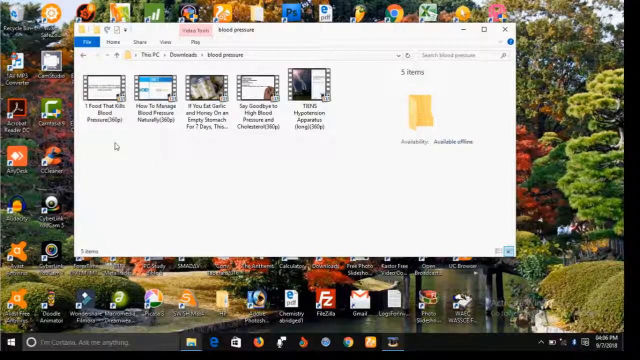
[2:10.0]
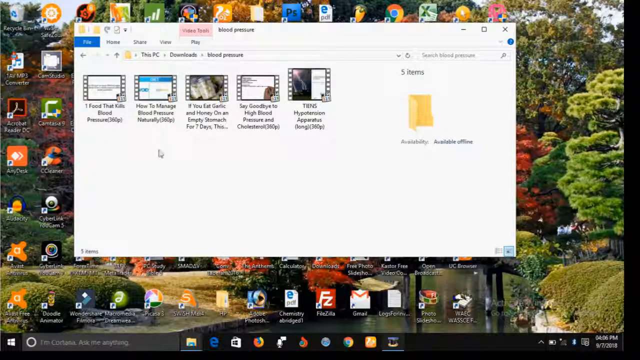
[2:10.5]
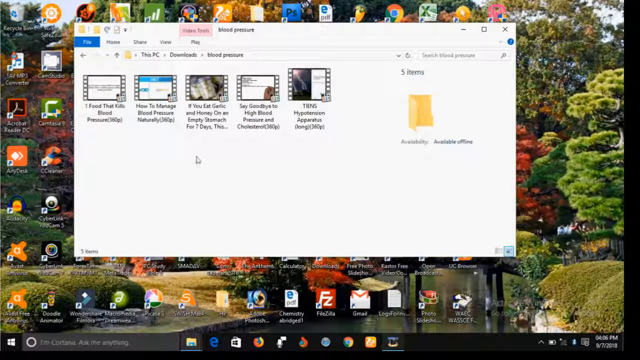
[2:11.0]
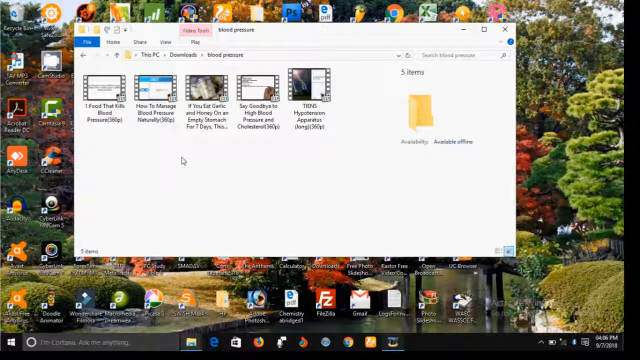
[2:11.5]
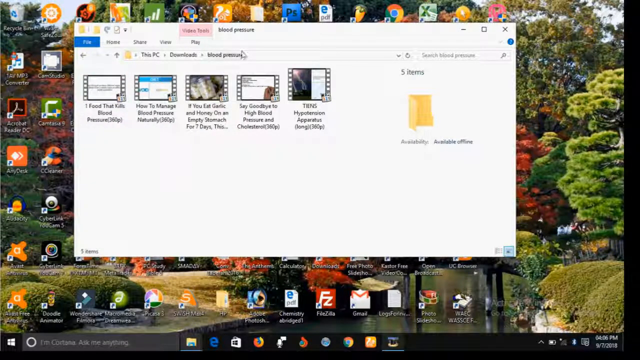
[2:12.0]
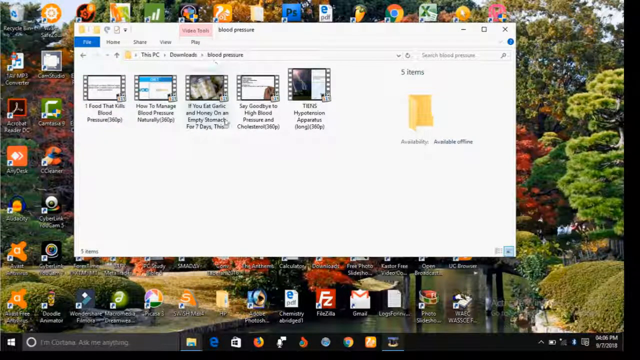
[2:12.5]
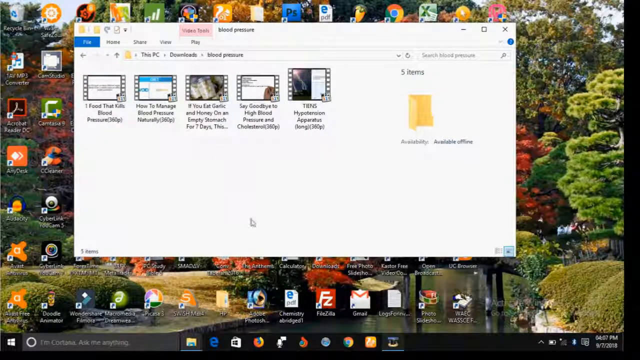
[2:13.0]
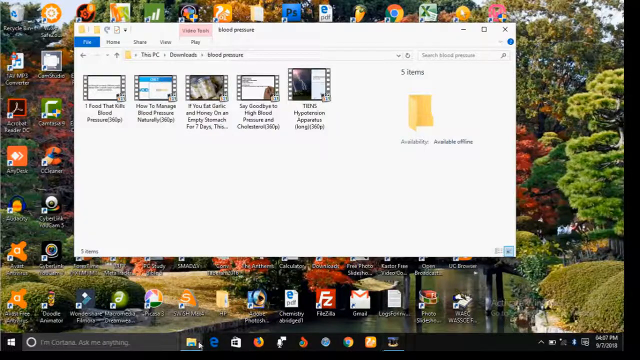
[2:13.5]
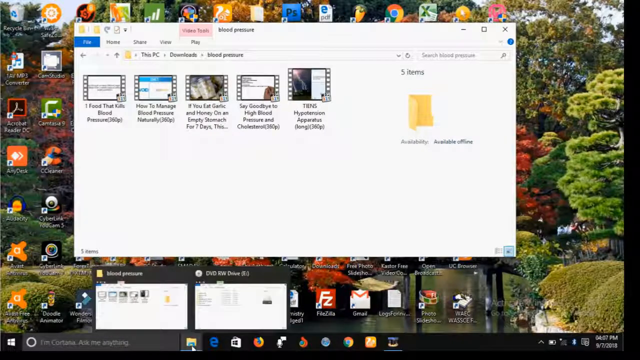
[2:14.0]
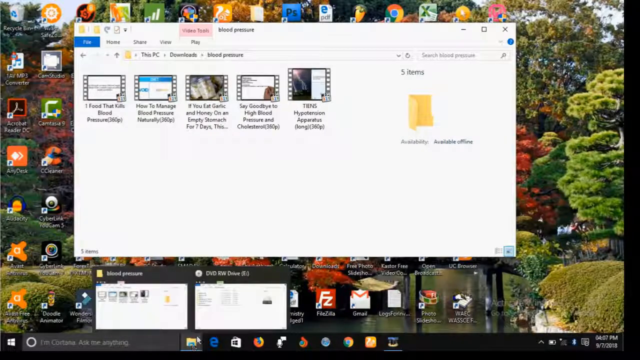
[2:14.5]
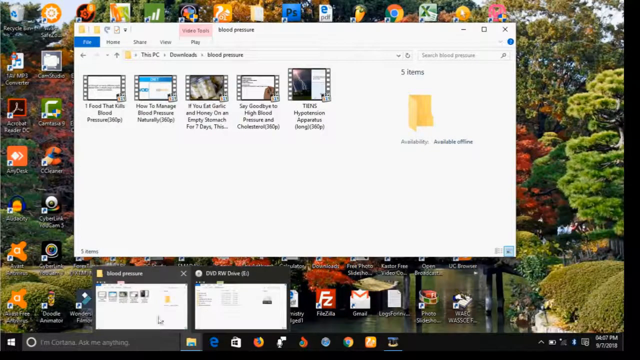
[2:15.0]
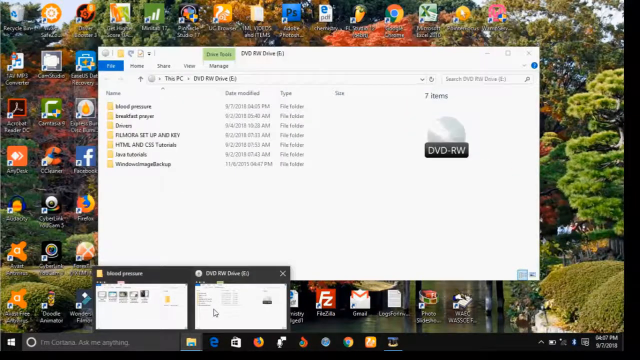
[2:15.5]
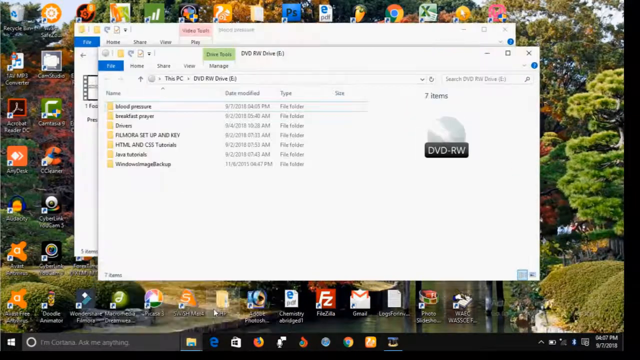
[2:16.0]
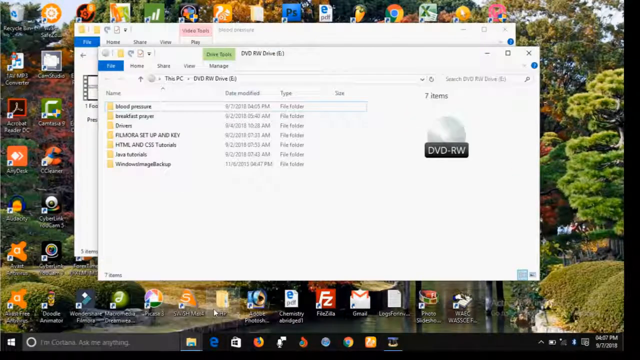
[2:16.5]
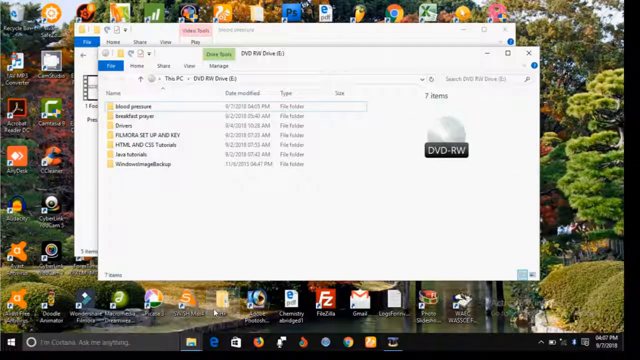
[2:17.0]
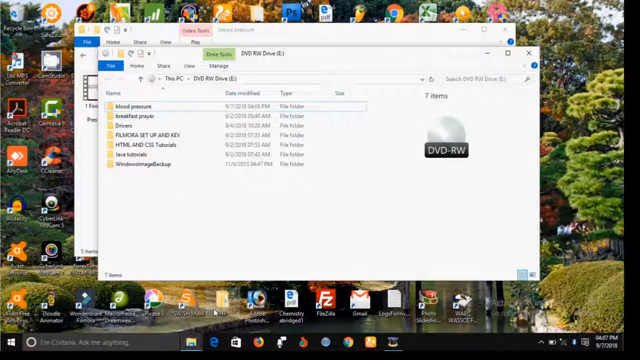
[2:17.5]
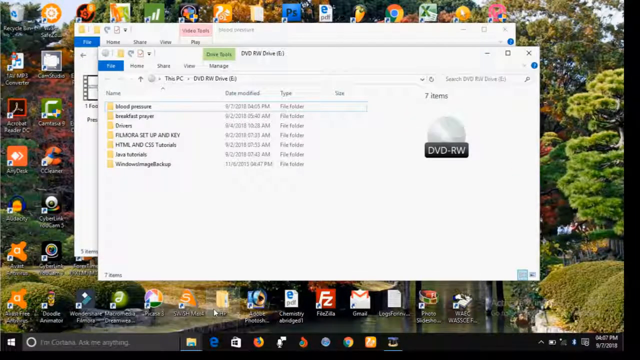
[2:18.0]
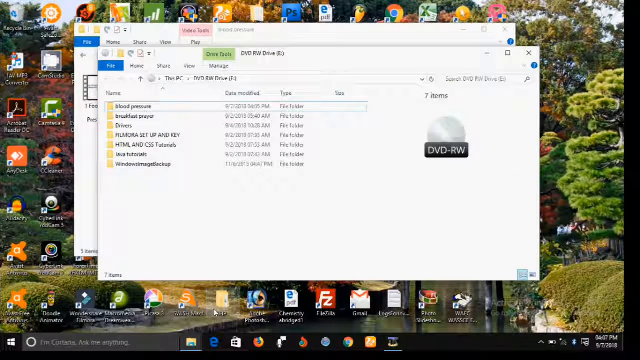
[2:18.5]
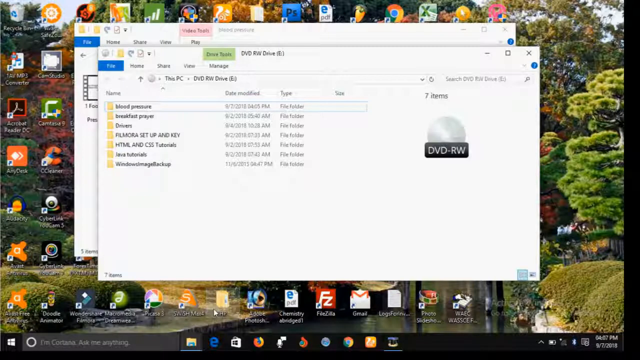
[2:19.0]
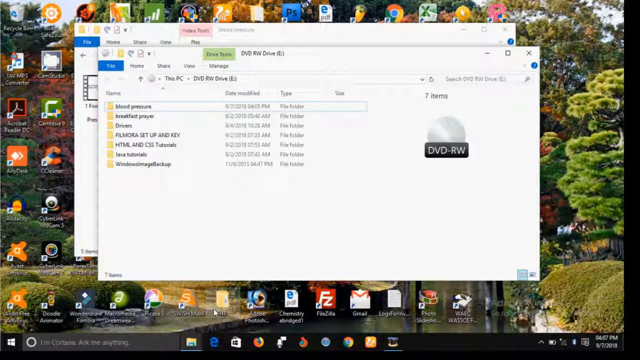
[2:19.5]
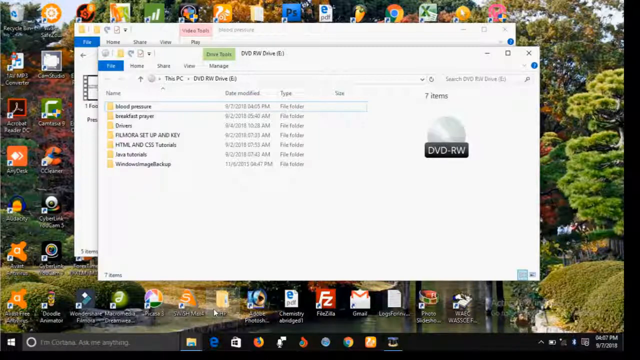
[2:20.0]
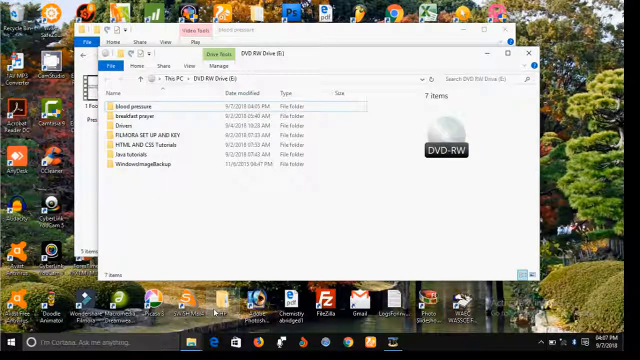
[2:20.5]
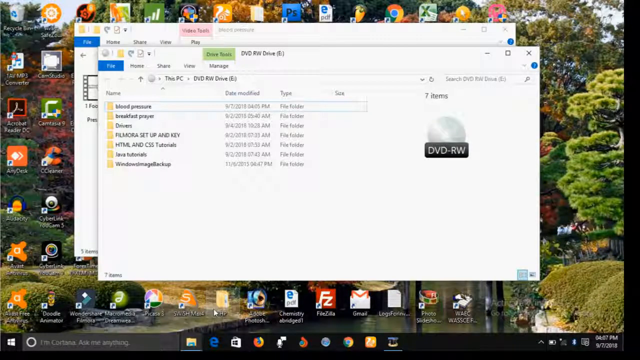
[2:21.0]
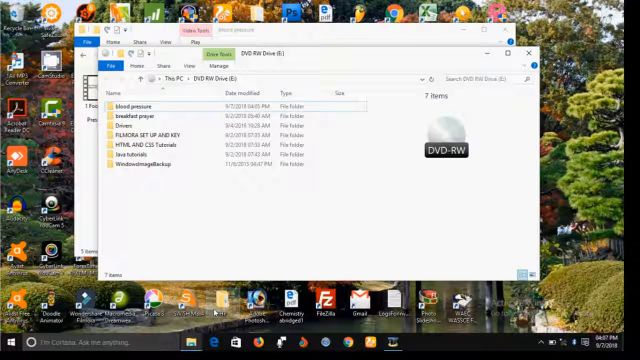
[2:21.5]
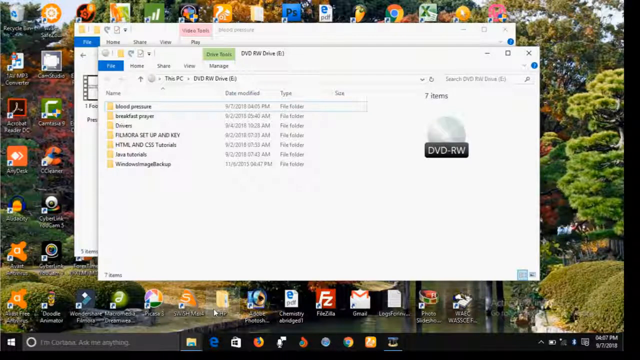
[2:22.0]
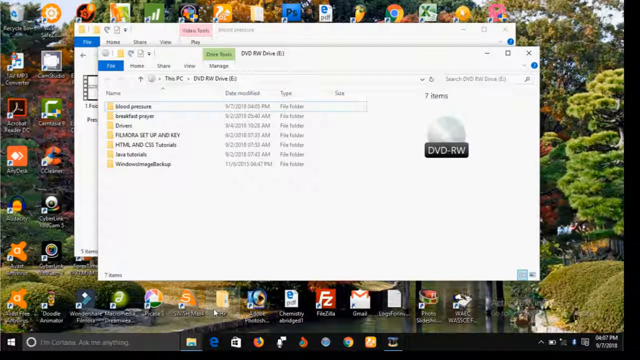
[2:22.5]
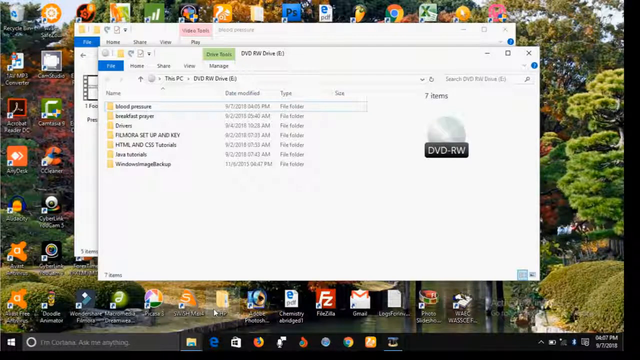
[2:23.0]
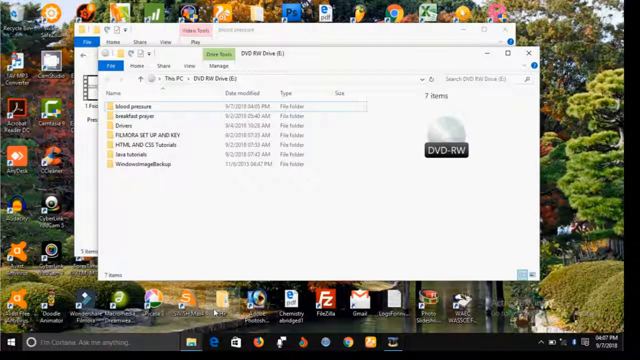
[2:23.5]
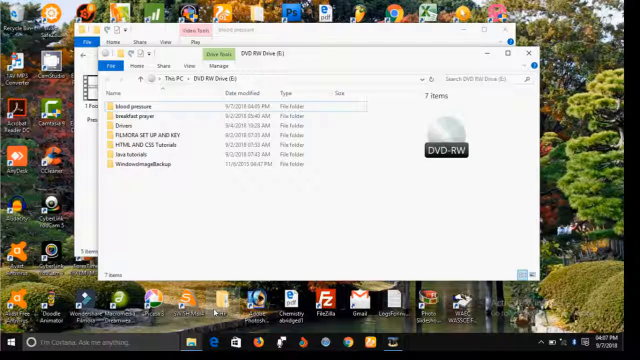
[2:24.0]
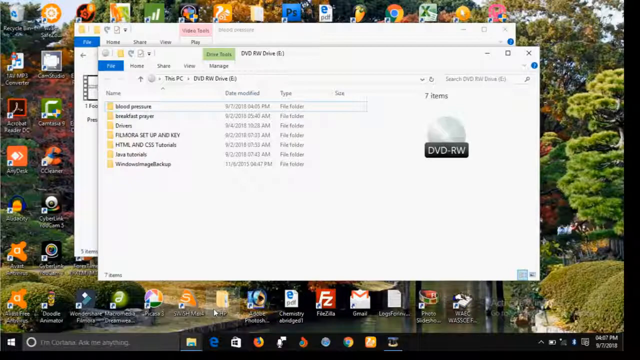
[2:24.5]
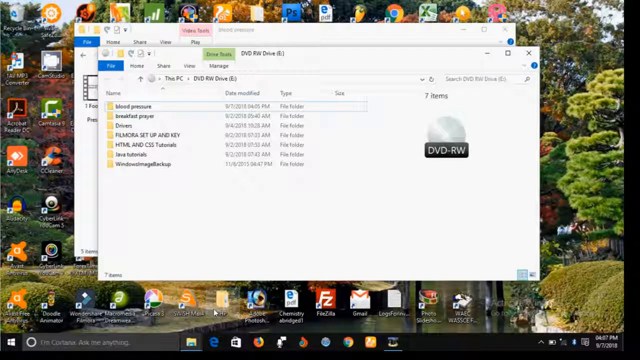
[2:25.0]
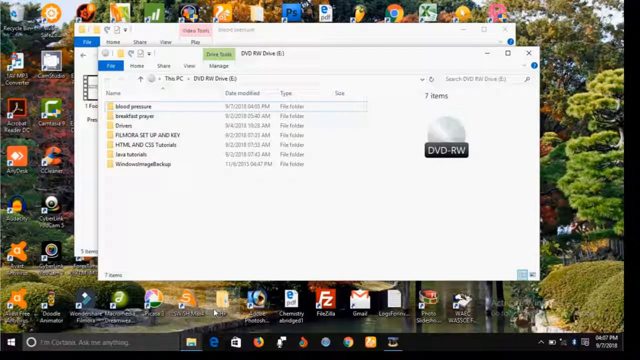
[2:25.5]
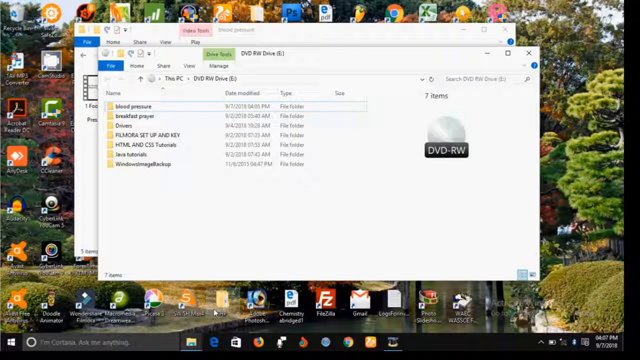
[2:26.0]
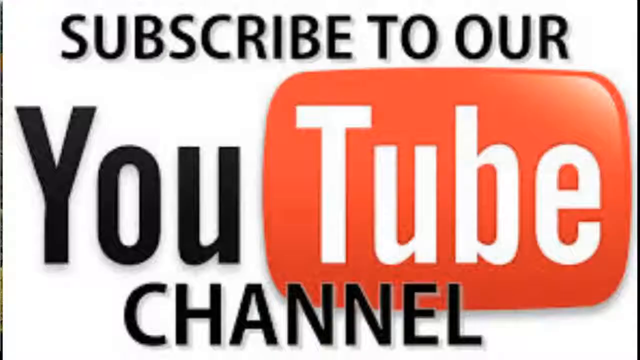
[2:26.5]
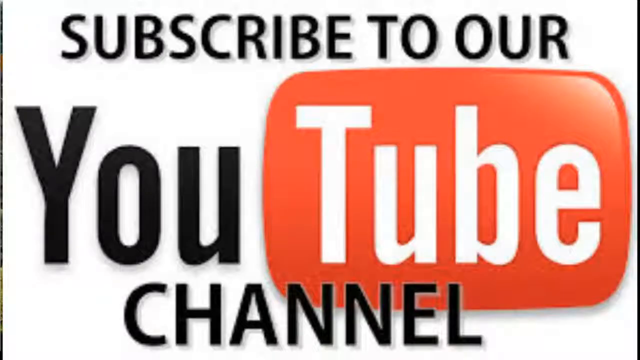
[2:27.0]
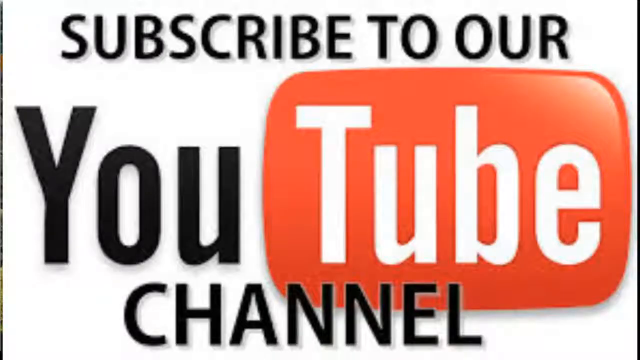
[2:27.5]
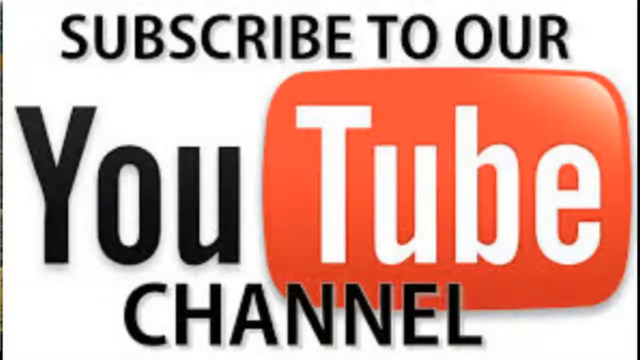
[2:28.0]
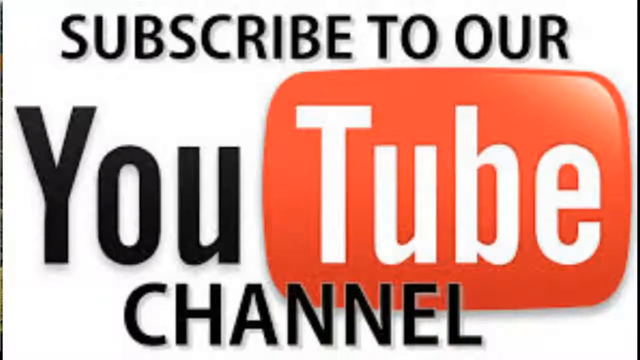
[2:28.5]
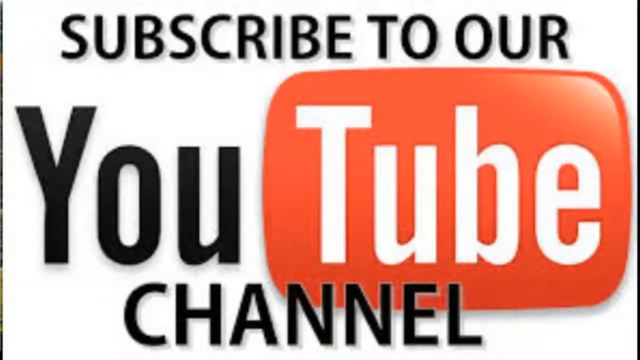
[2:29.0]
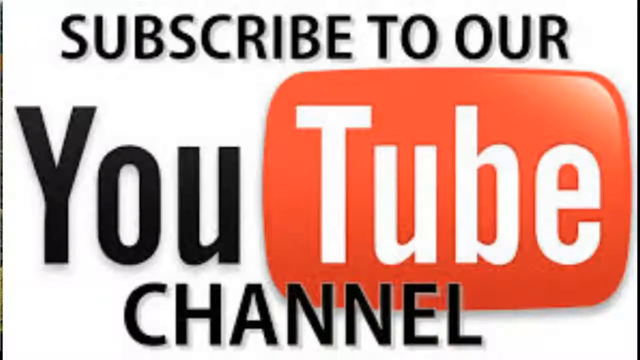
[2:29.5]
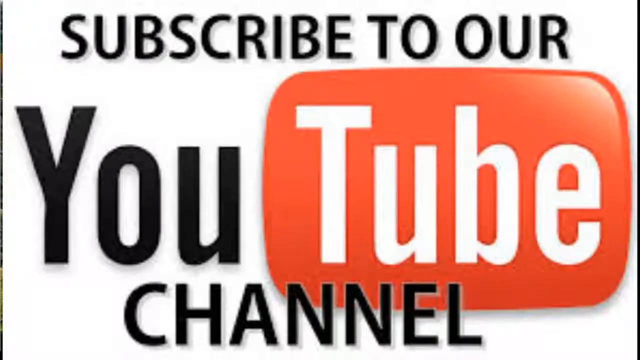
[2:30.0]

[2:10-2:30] The user moves the mouse to the second File Explorer window, which shows the DVD-RW drive, the writeable drive. An outro appears saying "subscribe to our youtube channel". The desktop holds plenty of folders and application shortcuts. CyberLink is in the left section, along with Audacity, whose icon is a blue headset with orange waves. CamStudio is in the top left section. In the bottom section there are J cam, a chemistry PDF file, and an icon of an orange square with the letters FZ, with Gmail to its right. To the left of the chemistry PDF is Adobe Flash Player, and to the left of that is the HP folder followed by Skype. At the top is Photoshop, which is blue, with another PDF to its right, along with Fruity Loops and Chrome shortcuts. The PDFs have the letter E on them, indicating they open with Microsoft Edge.